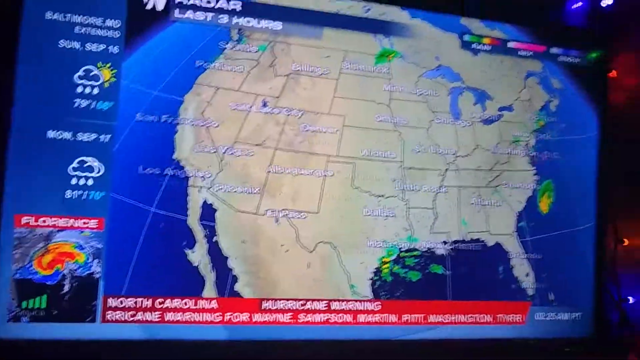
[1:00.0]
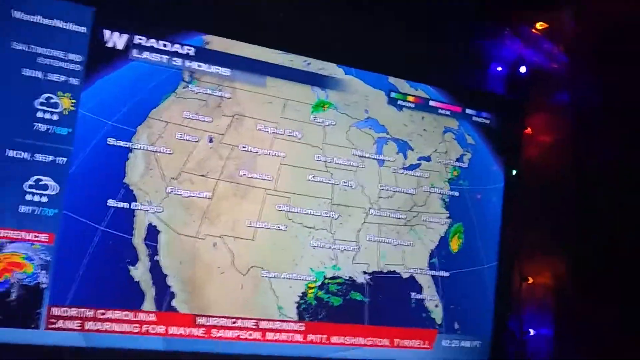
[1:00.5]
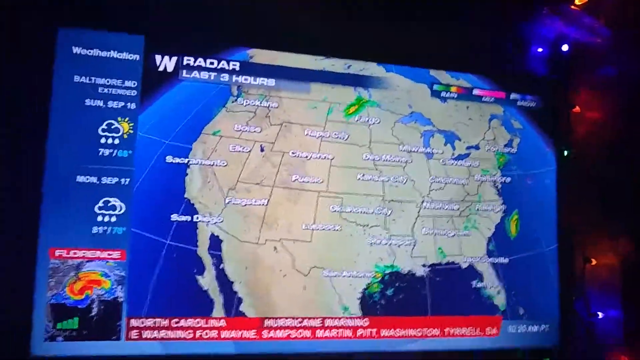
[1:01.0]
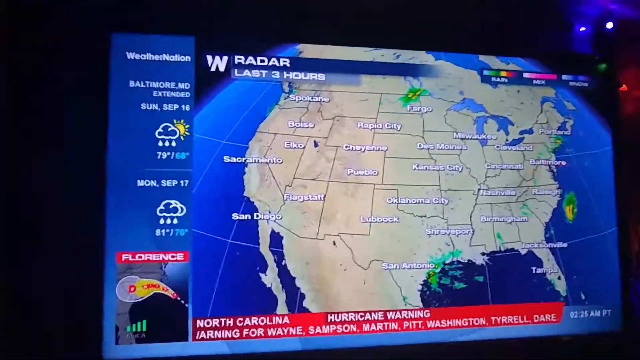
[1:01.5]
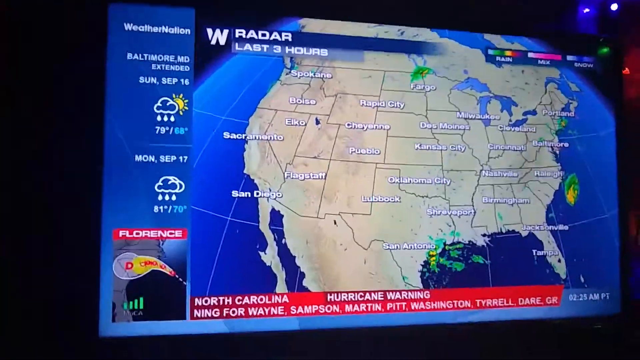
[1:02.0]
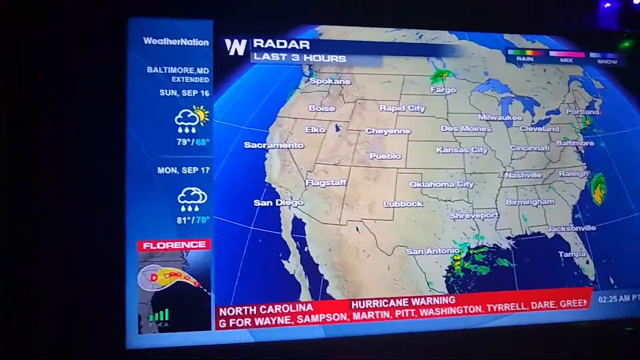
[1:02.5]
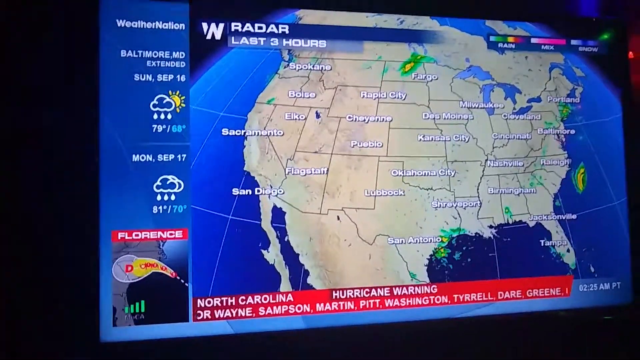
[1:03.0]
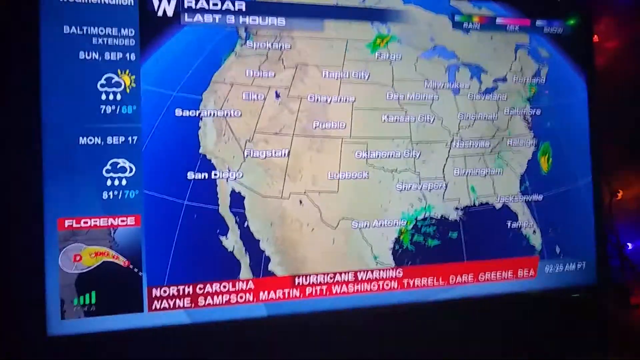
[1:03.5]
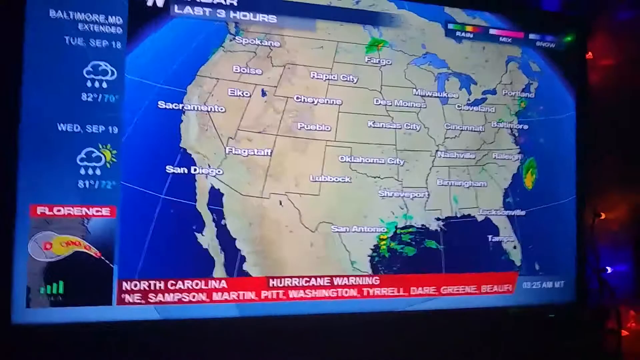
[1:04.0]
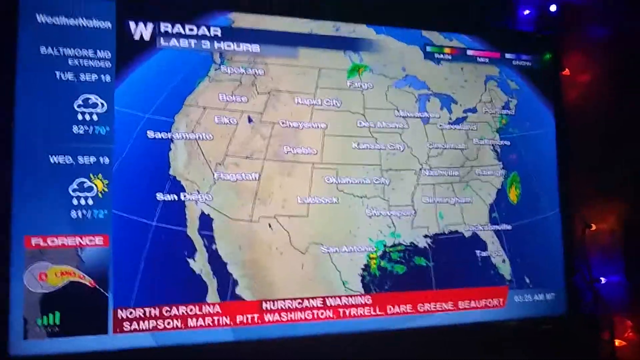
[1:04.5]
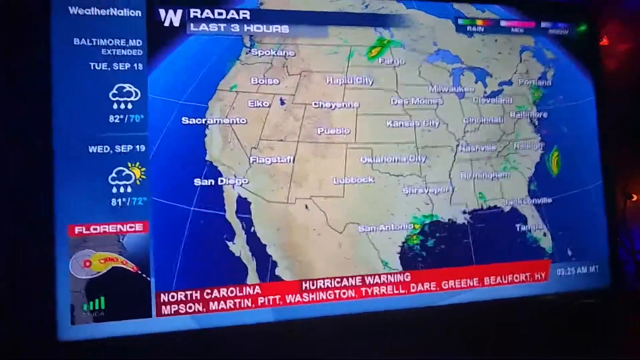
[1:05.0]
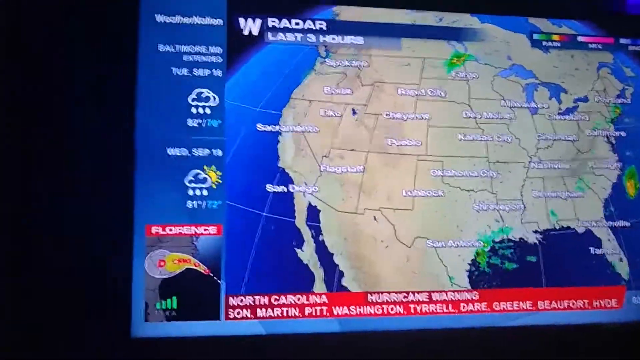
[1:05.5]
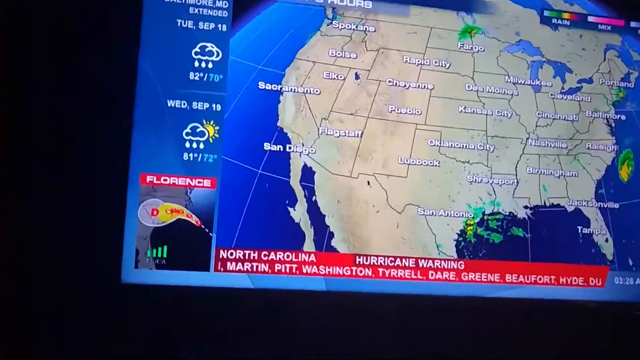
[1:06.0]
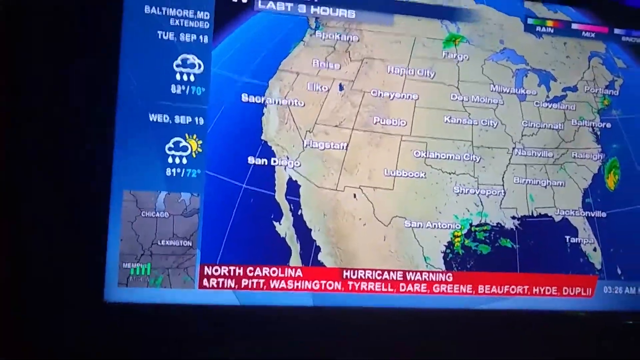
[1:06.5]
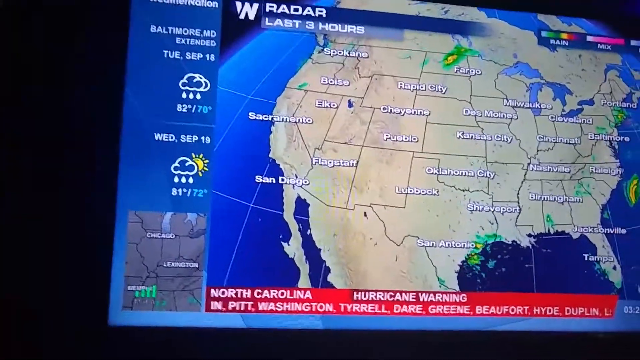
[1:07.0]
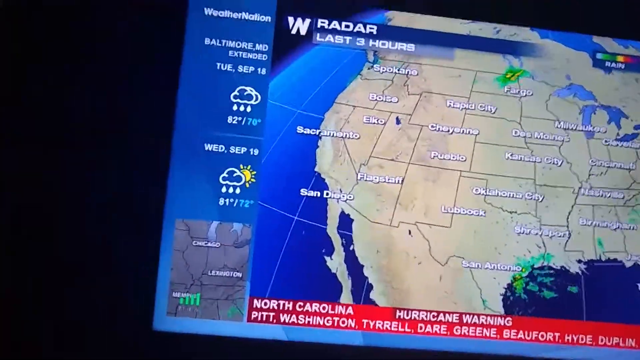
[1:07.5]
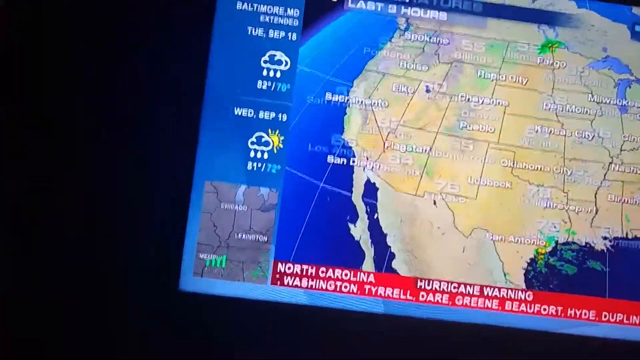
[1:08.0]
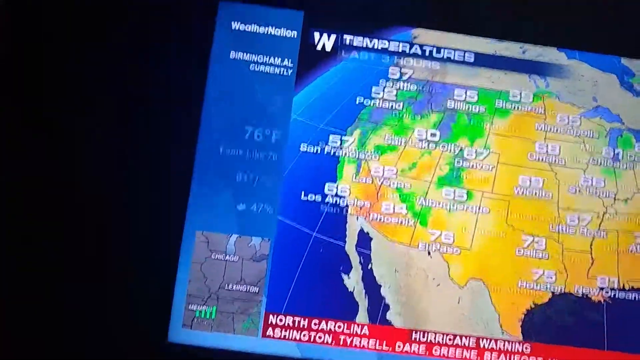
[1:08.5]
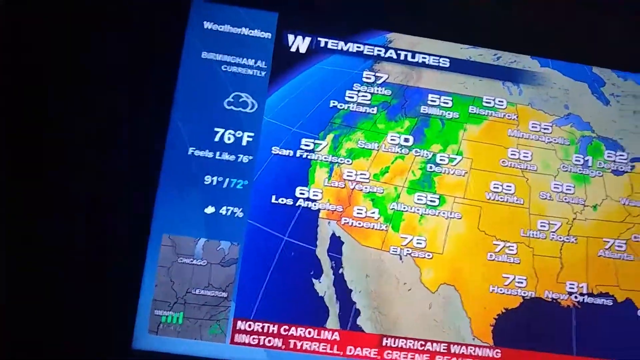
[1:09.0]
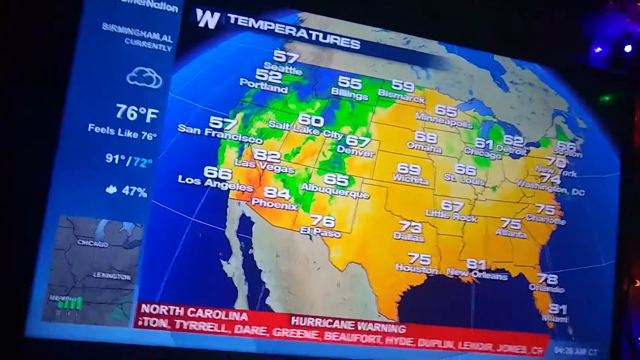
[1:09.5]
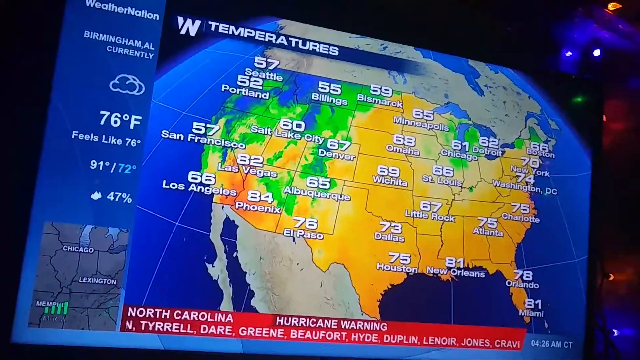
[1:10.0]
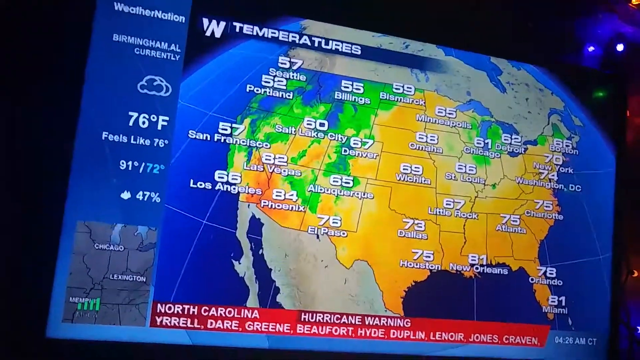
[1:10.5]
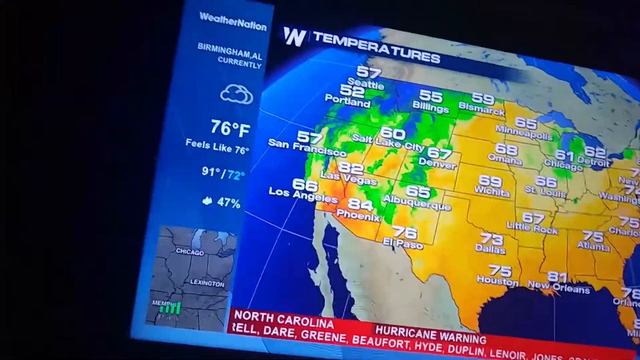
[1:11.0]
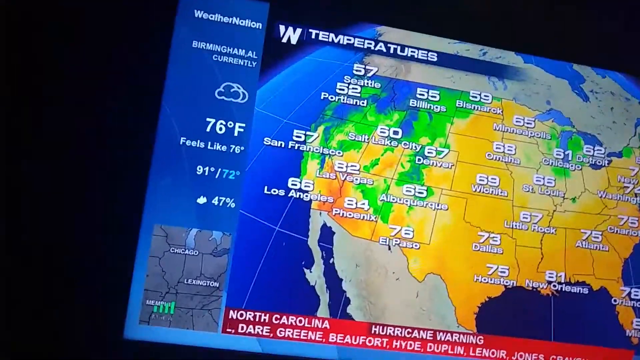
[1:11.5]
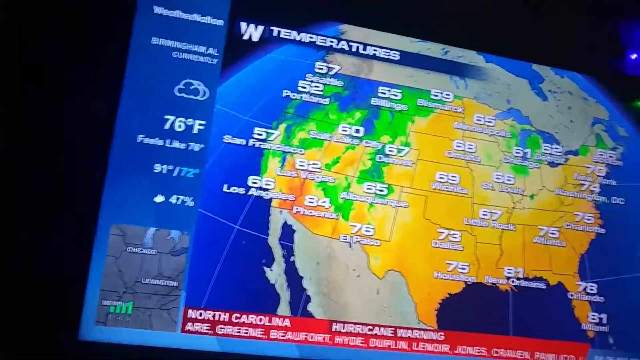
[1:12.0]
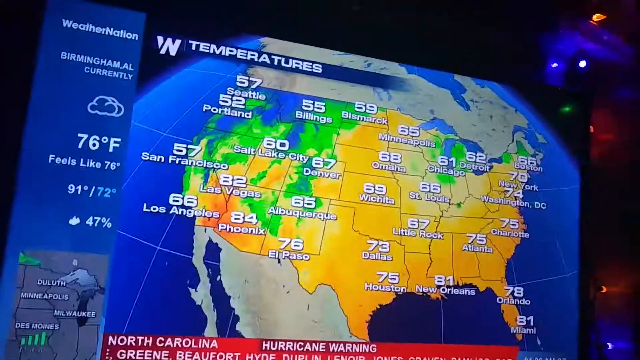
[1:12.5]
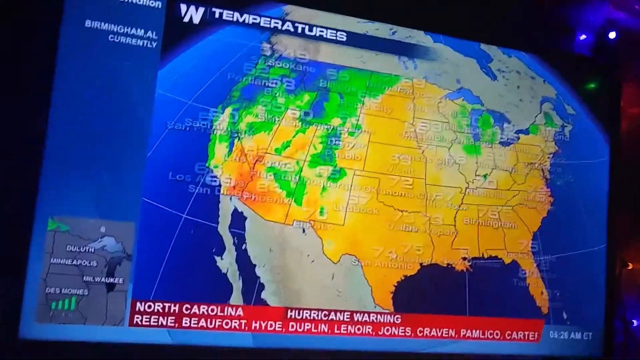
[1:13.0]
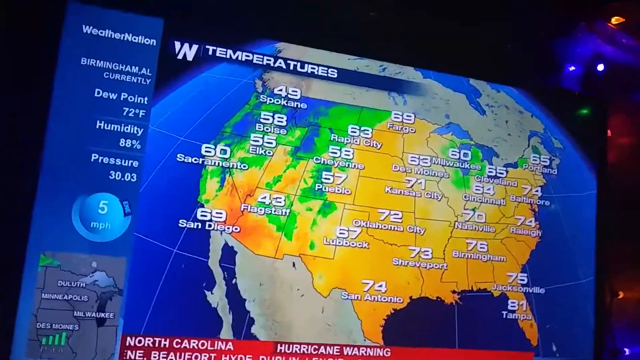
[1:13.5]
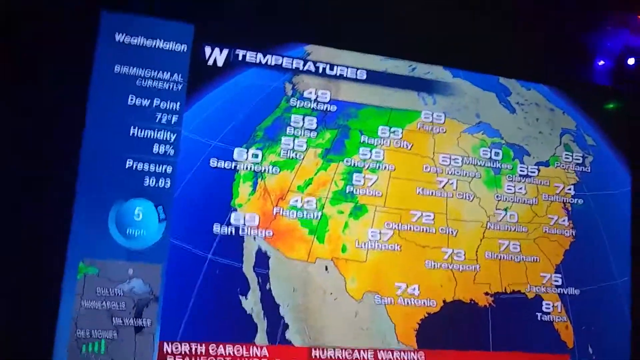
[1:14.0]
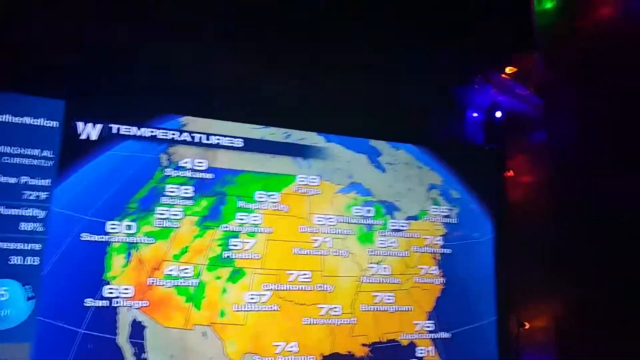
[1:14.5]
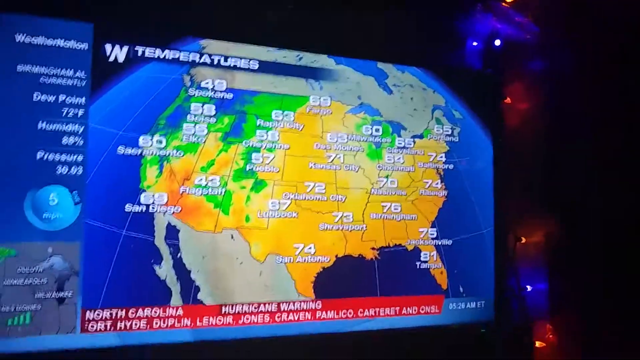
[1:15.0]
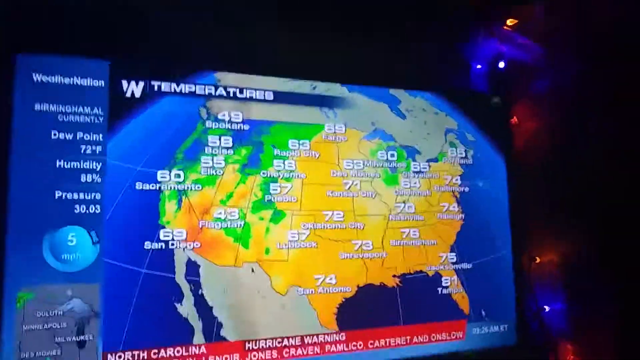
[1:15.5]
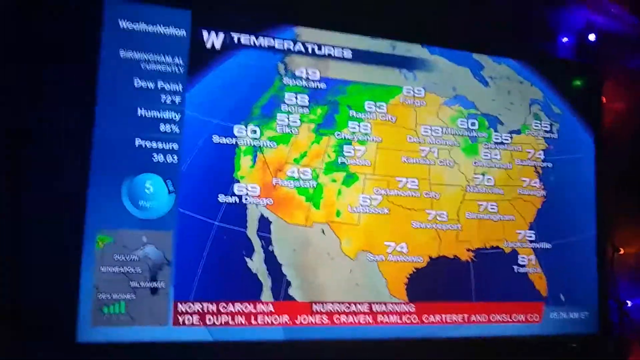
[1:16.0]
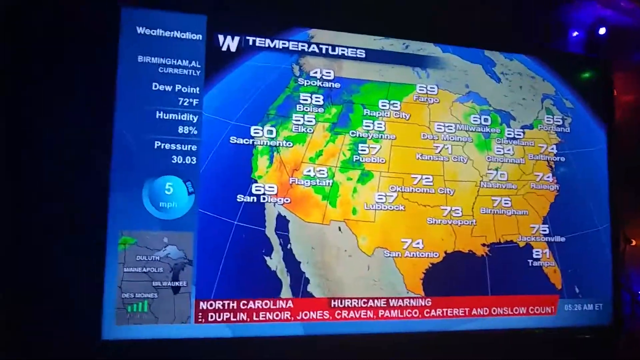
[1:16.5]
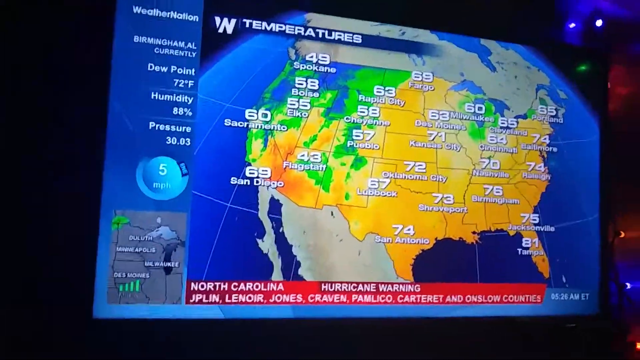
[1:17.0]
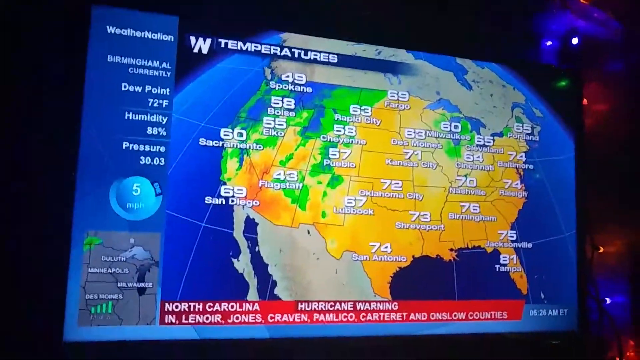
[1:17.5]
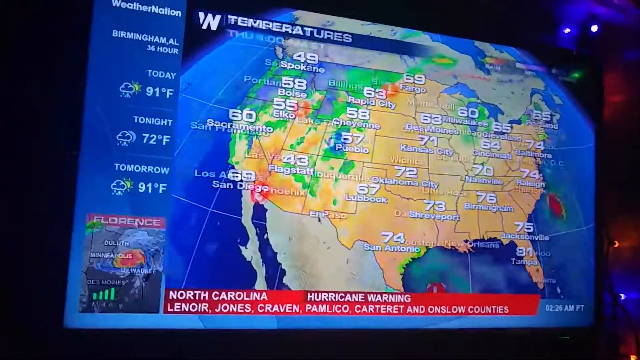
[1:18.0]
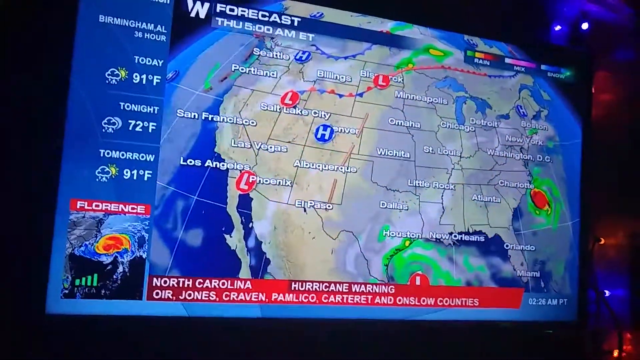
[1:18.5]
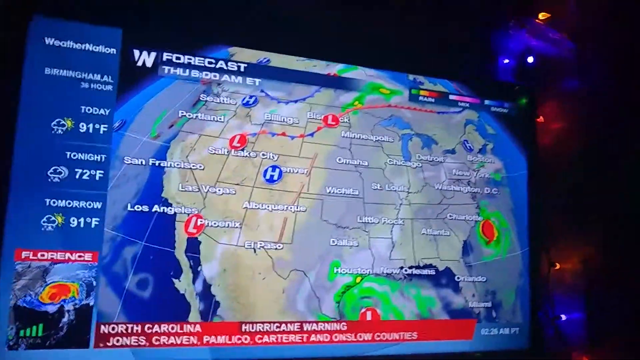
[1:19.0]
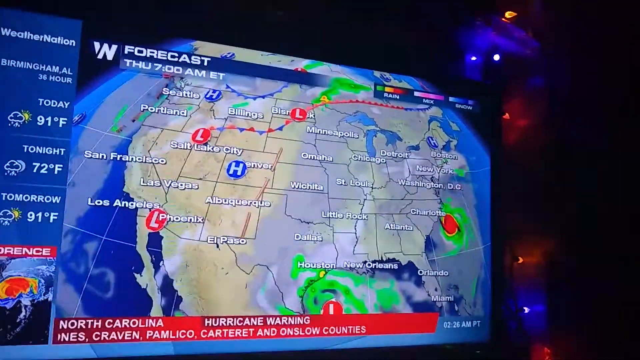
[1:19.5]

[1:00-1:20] The full map of the United States remains on screen as the camera shakes around, with the green areas moving around a bit. It then transitions to a temperature view with "temperatures" at the top left. Most of the United States is colored orange, with temperatures ranging from 84 to 57, and the areas at the top left are blue. Temperatures are shown for various large cities, including Washington, D.C. and San Antonio, among many others. The view then transitions to different cities on the same map. After another transition, "forecast" appears in the top left. A blue and red line snakes down from Canada into the Midwest and then goes west, labeled with an L icon. Other icons appear, including a blue H in certain spots in the west and another L off the line in the southwest near the border with Mexico. Green areas showing rain appear off the coast of Carolina and off the coast of Texas.